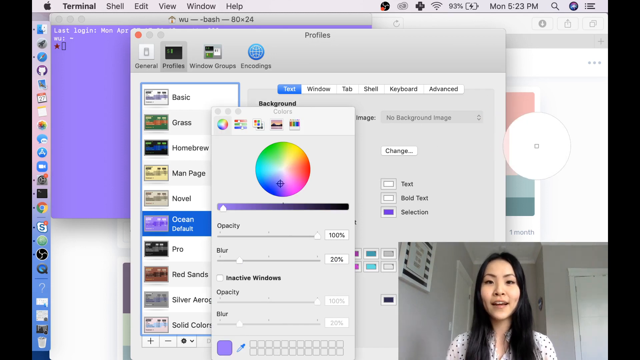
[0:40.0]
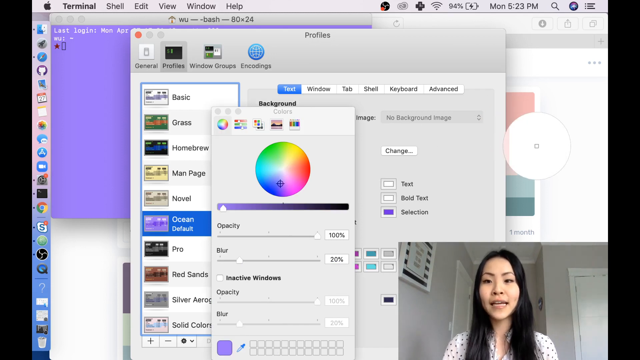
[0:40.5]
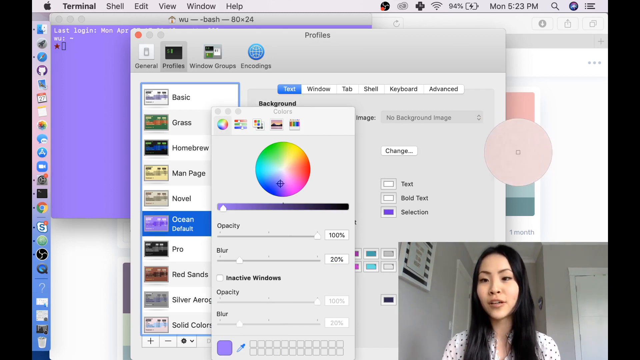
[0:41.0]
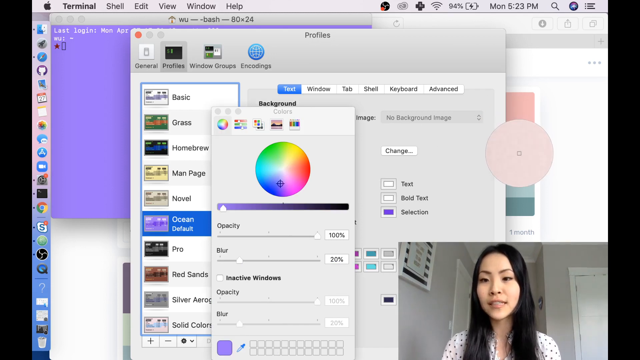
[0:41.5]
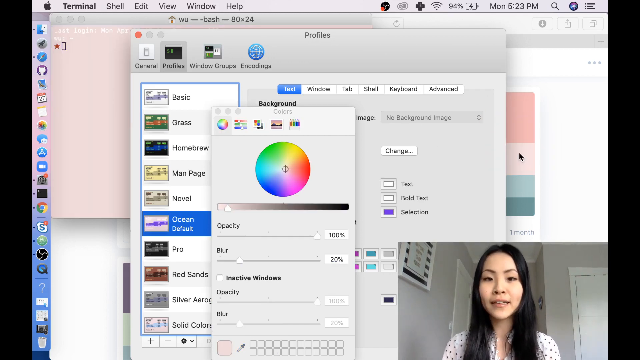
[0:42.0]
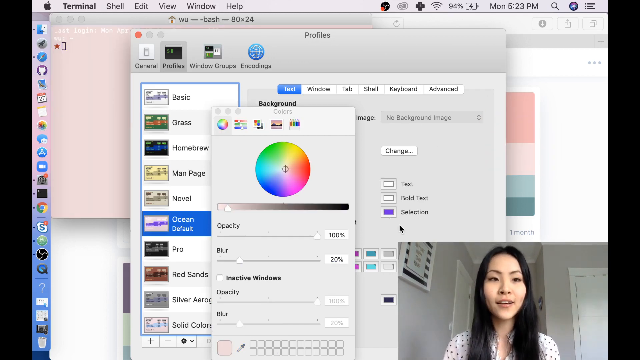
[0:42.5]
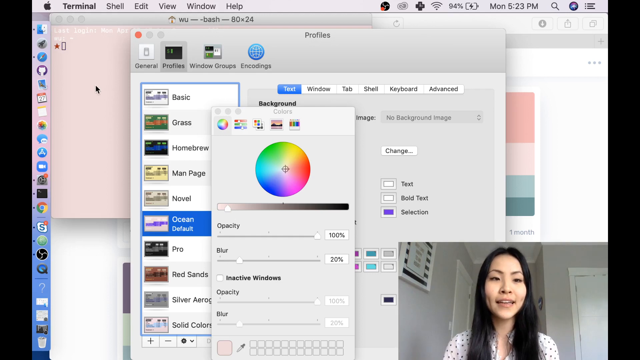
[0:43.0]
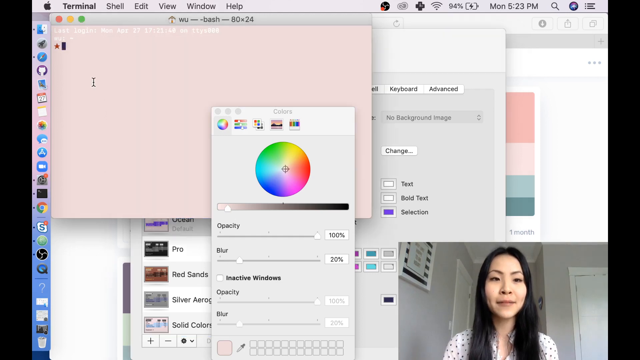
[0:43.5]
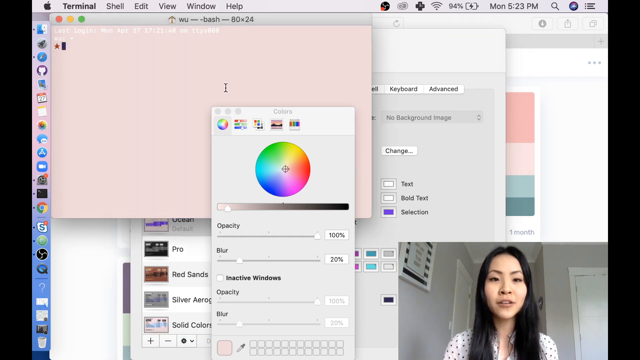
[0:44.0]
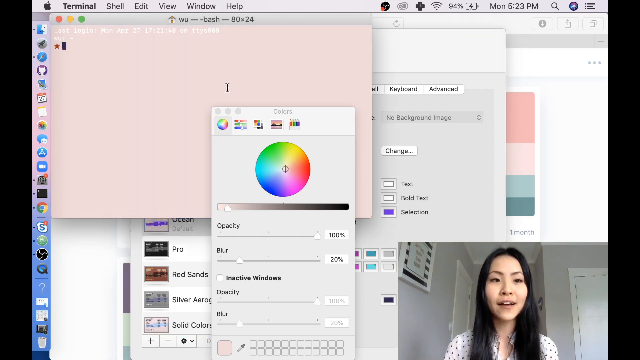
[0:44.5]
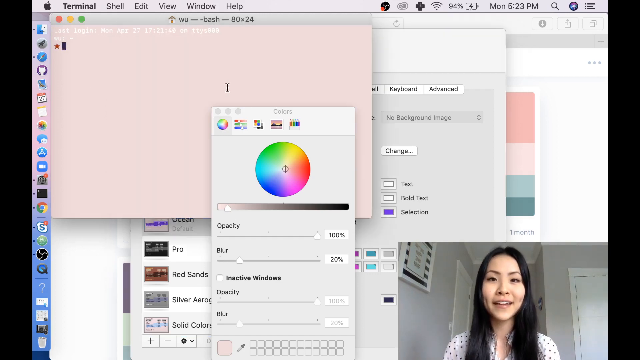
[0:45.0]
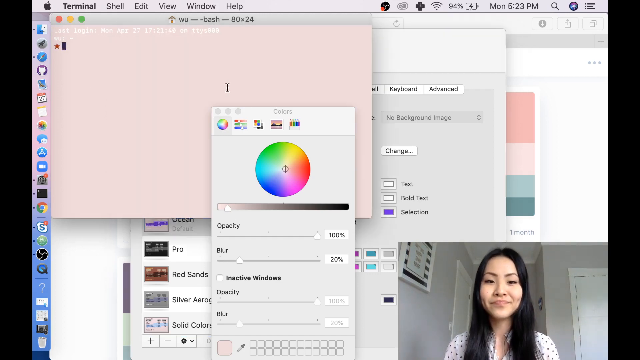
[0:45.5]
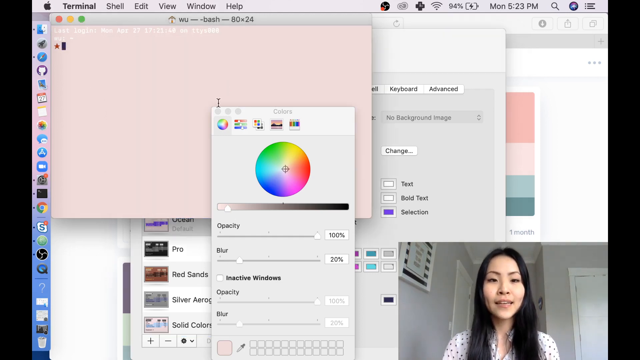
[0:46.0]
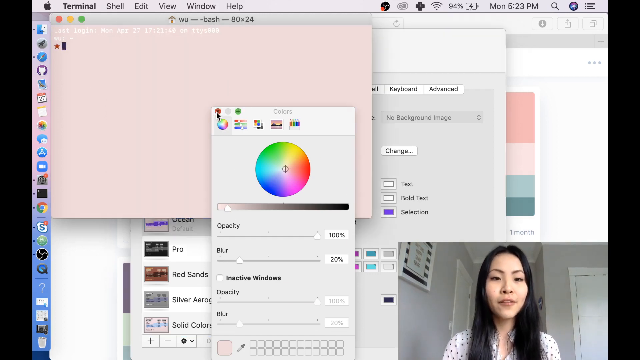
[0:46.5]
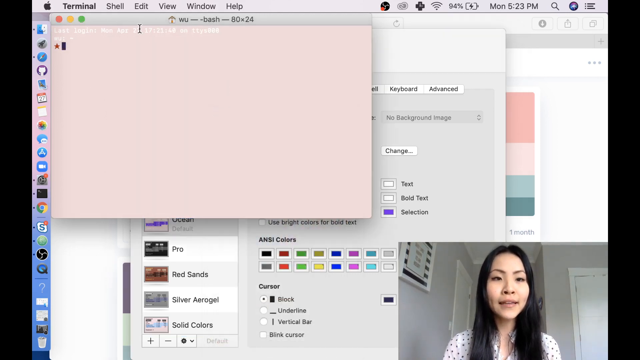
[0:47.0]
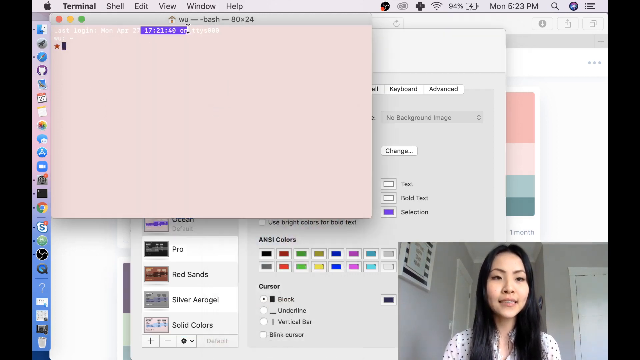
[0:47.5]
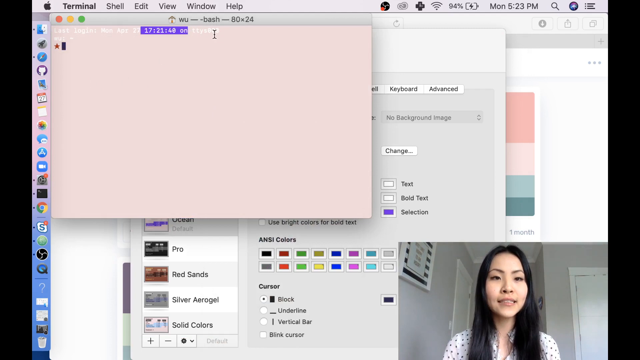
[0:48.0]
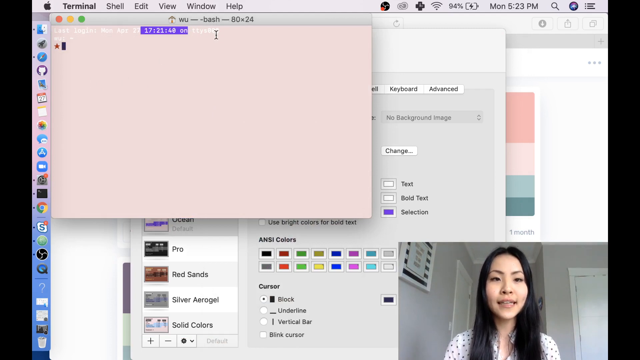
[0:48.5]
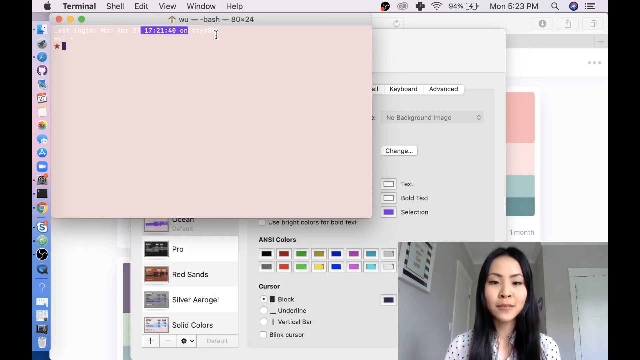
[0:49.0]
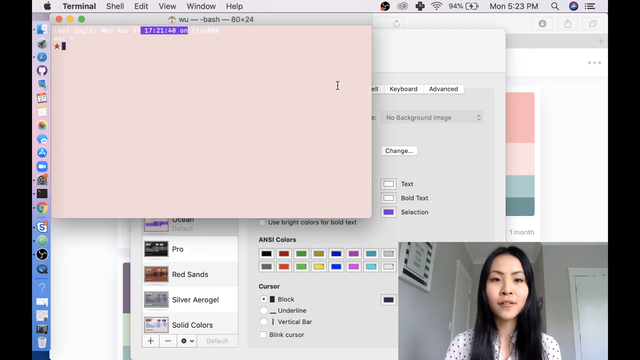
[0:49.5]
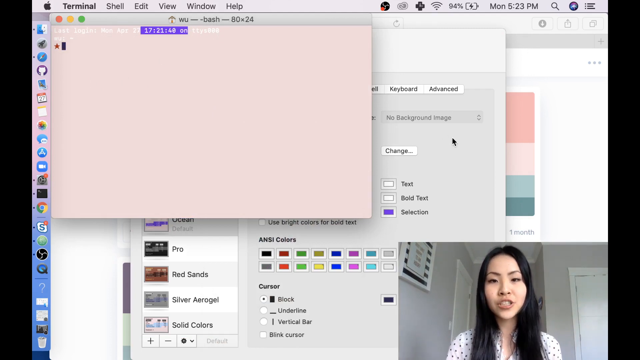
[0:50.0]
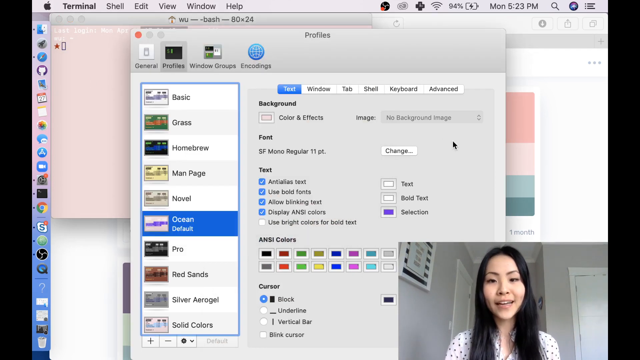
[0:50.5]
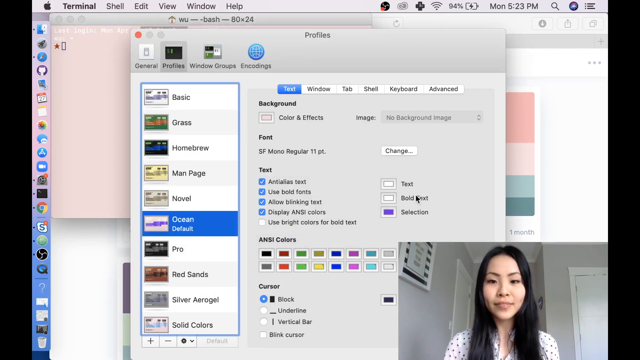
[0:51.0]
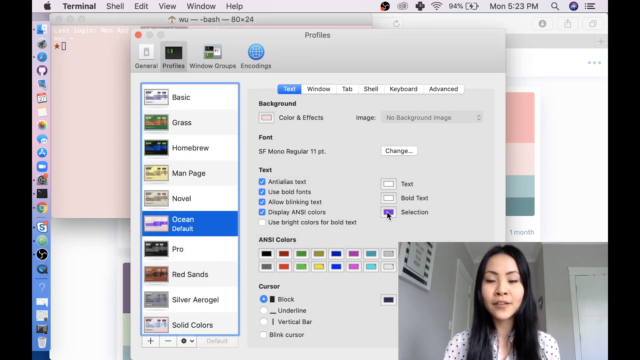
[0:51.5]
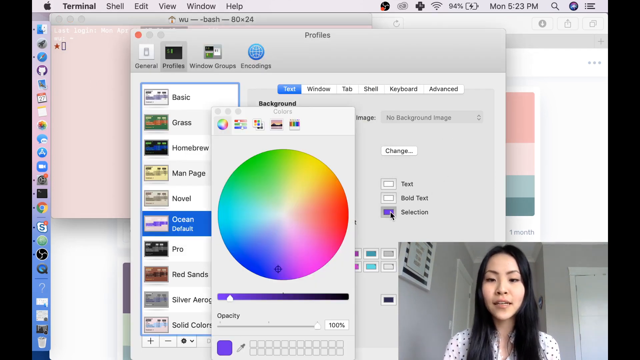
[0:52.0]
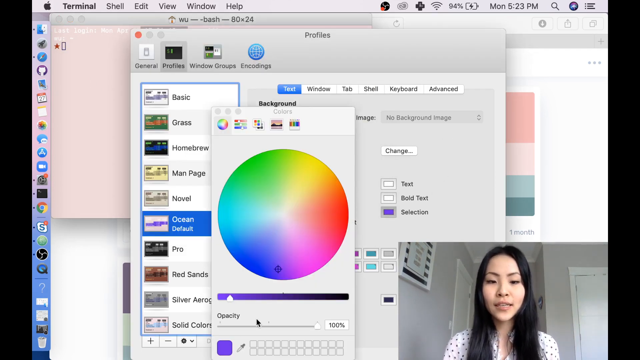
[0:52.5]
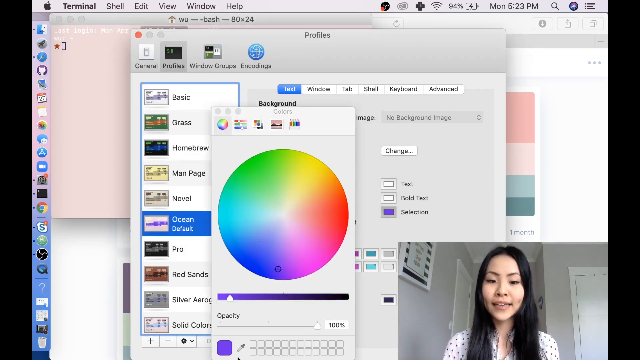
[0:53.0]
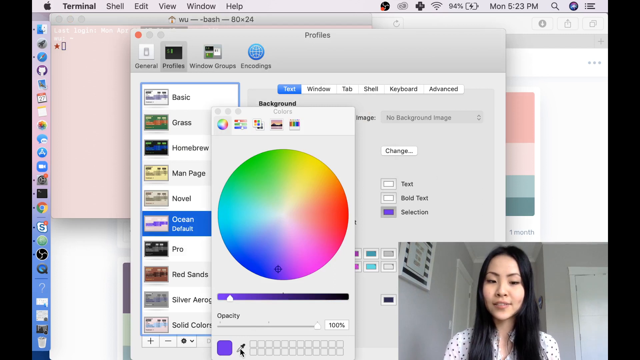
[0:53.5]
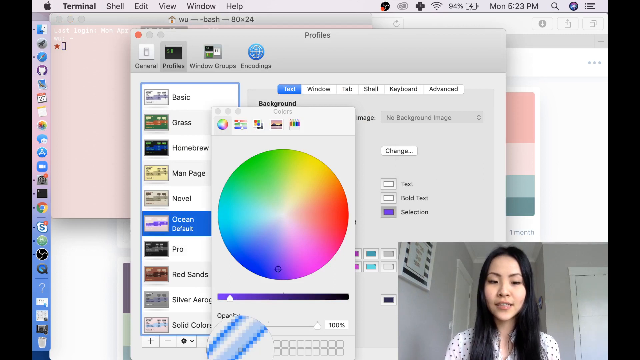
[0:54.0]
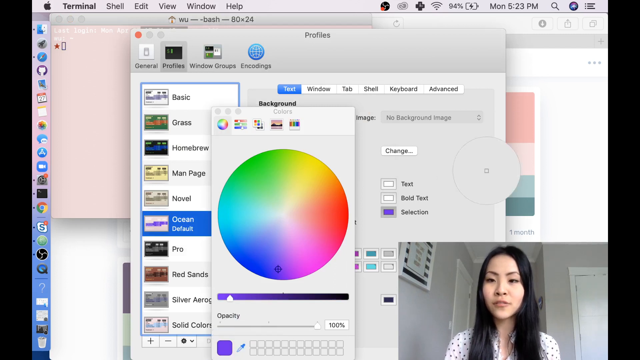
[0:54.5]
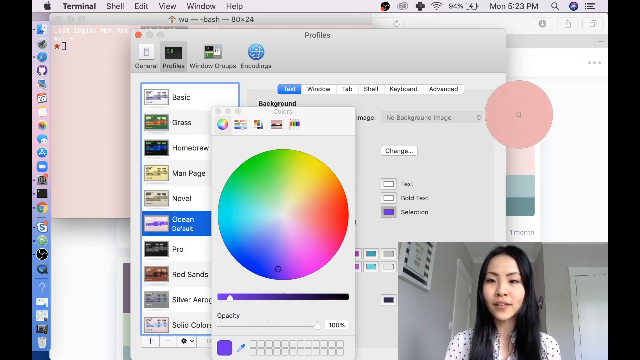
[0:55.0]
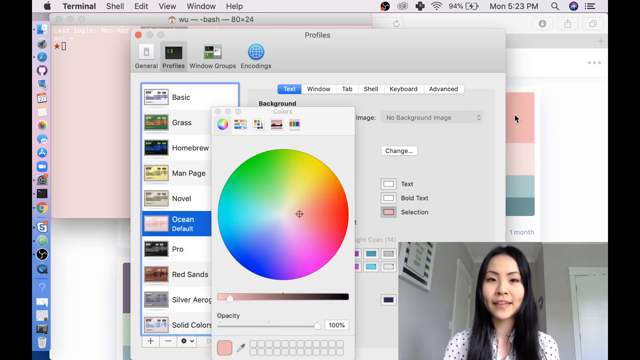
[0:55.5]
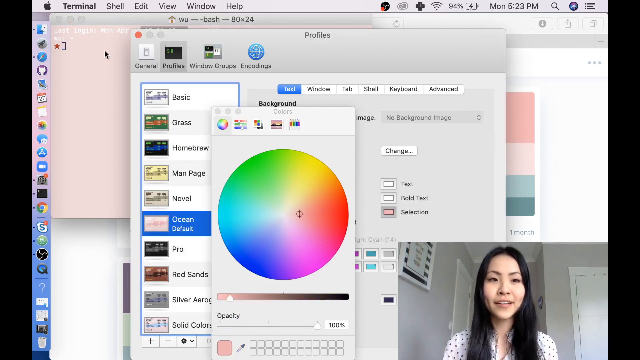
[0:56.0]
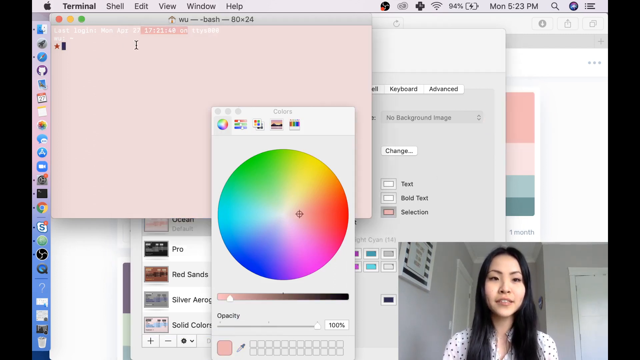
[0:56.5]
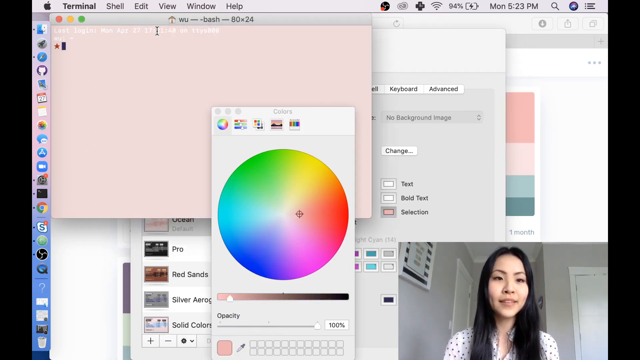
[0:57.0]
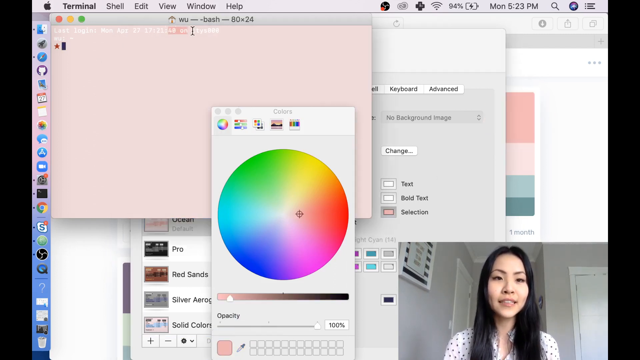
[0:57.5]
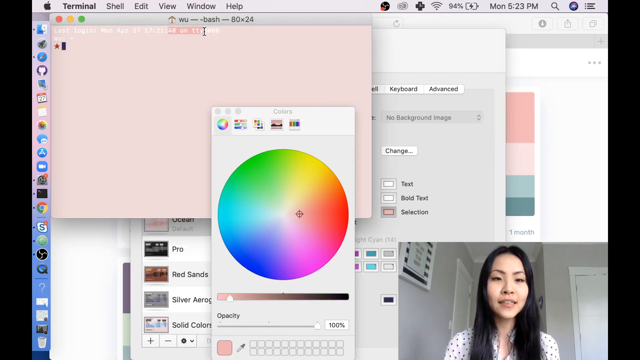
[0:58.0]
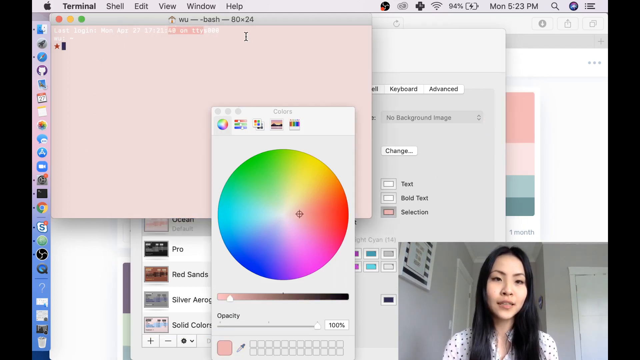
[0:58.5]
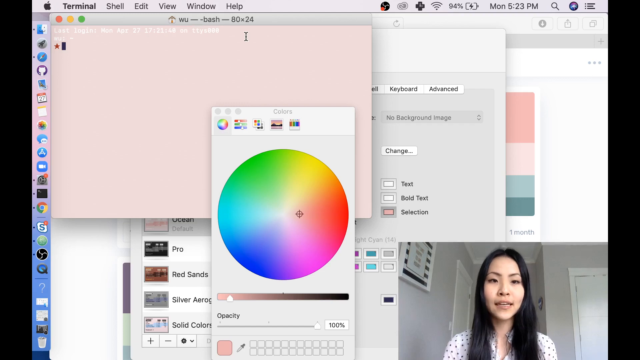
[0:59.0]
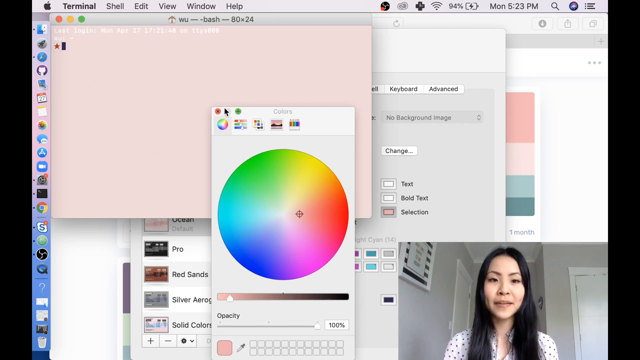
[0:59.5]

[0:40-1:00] In this tutorial, an Asian woman is in the bottom right-hand section of the screen. The screen shows various sections, and cursors are used to scroll to different areas. A color wheel displays light and dark areas, with contrast between them. The woman appears to be in her room, very likely in her house.